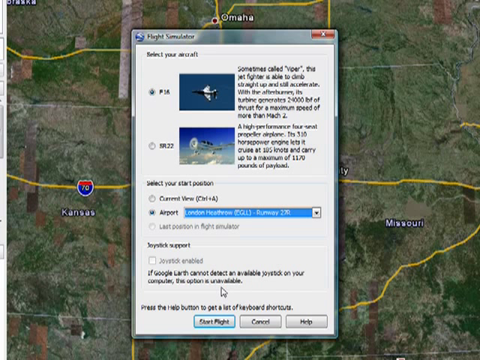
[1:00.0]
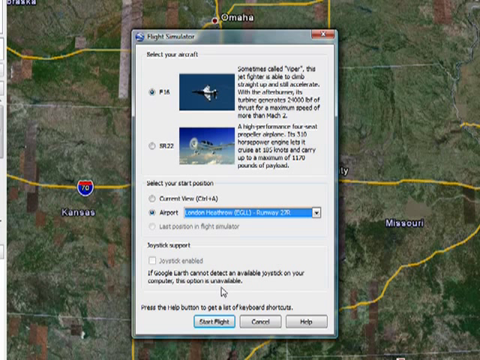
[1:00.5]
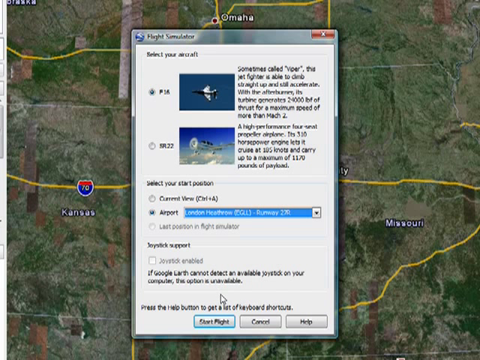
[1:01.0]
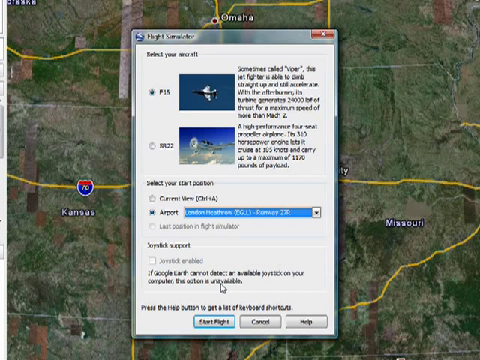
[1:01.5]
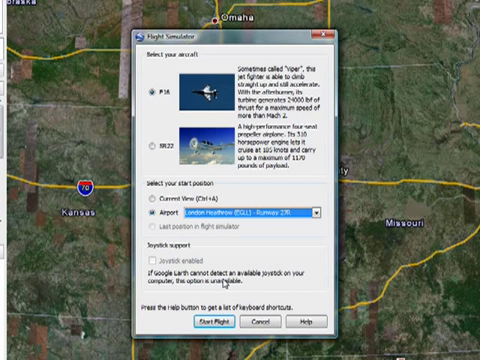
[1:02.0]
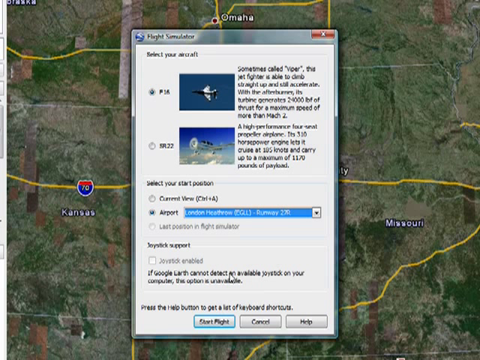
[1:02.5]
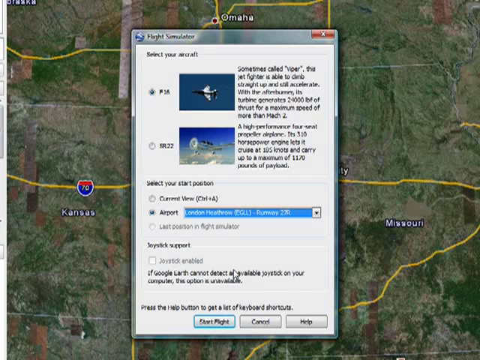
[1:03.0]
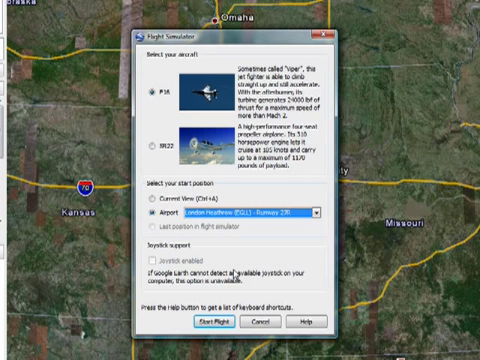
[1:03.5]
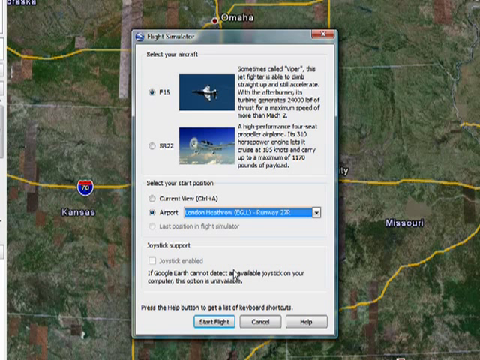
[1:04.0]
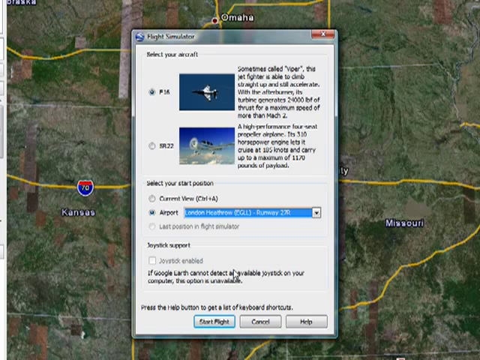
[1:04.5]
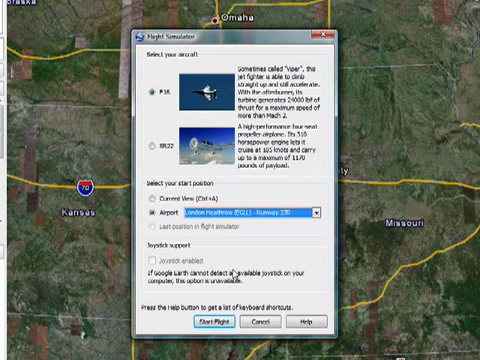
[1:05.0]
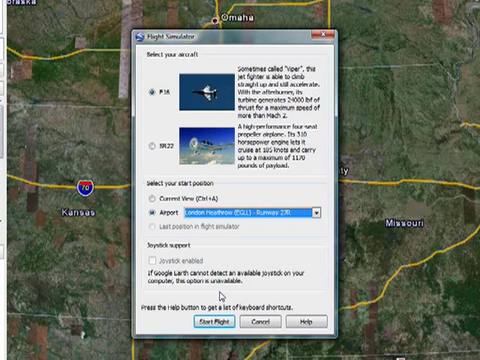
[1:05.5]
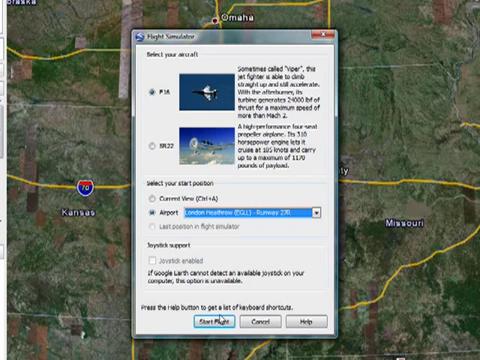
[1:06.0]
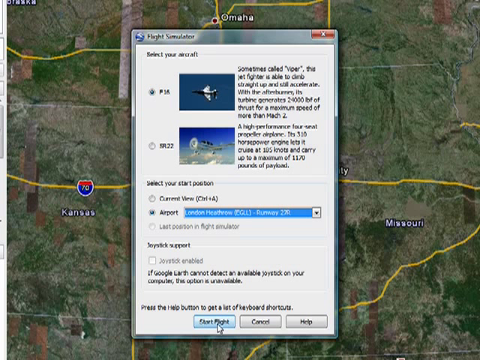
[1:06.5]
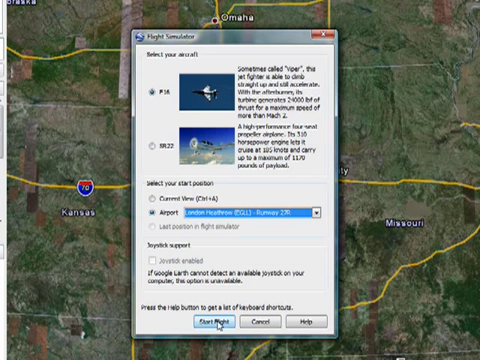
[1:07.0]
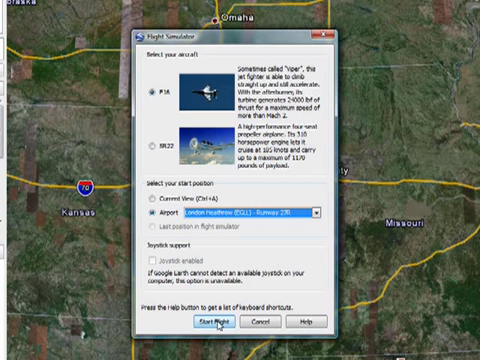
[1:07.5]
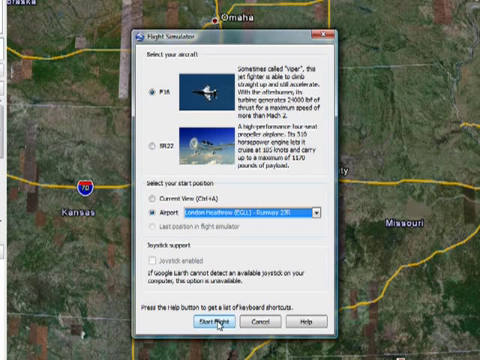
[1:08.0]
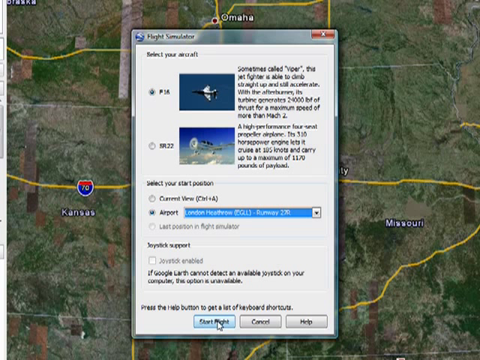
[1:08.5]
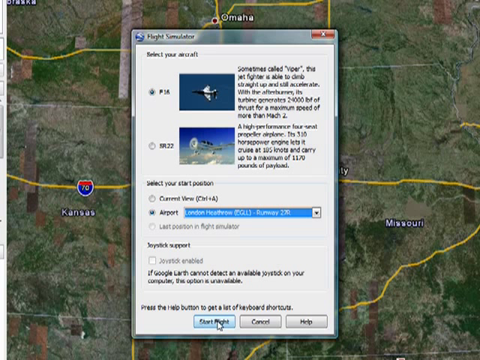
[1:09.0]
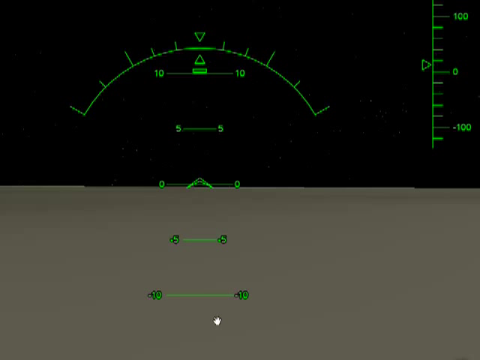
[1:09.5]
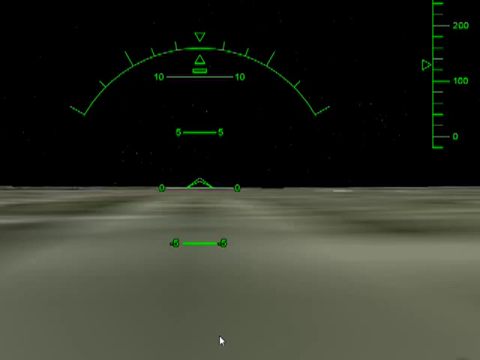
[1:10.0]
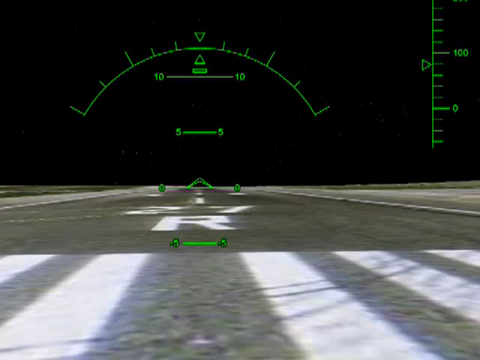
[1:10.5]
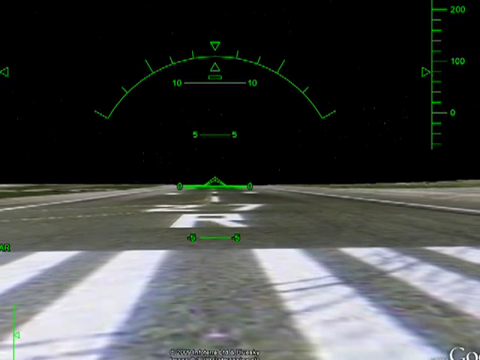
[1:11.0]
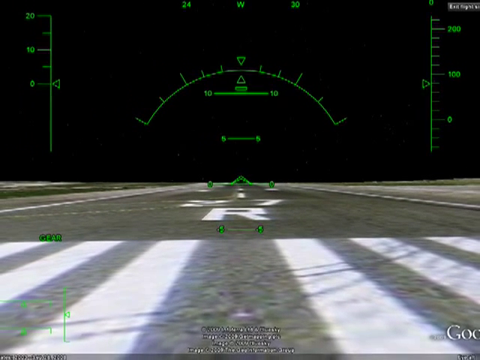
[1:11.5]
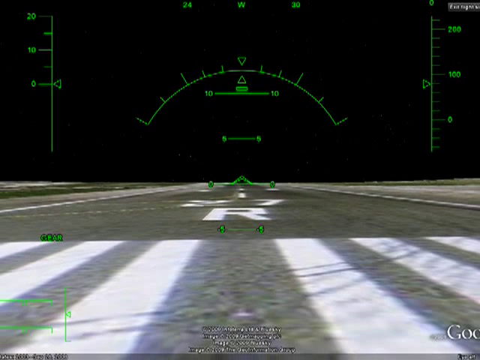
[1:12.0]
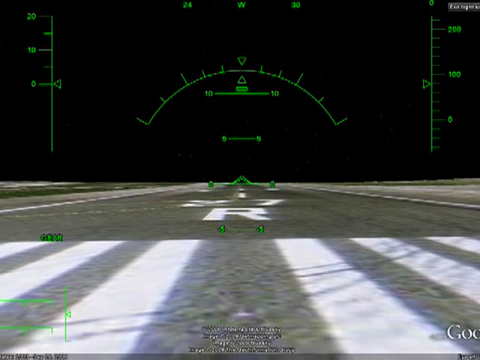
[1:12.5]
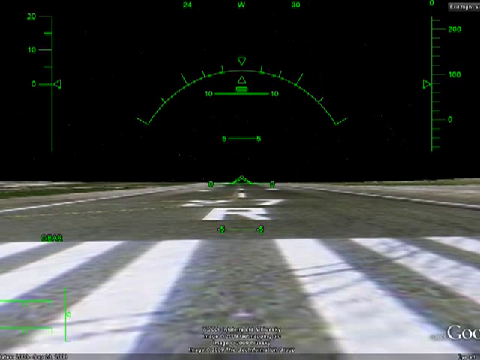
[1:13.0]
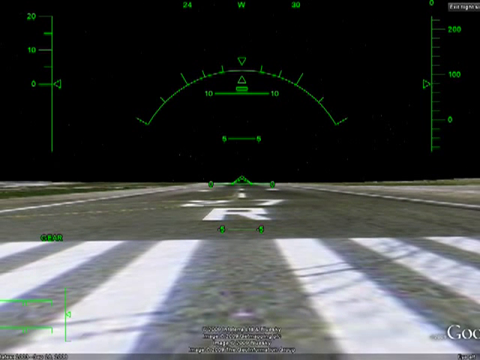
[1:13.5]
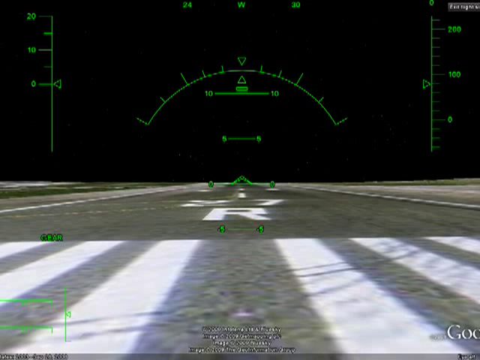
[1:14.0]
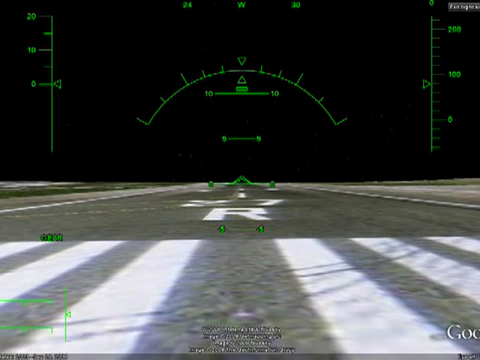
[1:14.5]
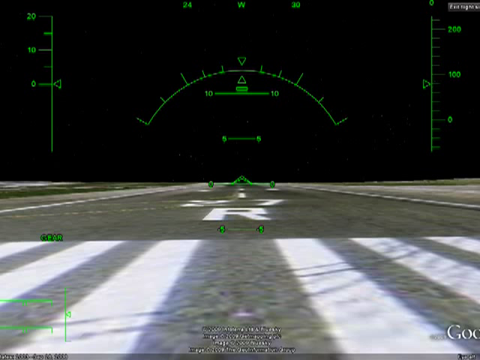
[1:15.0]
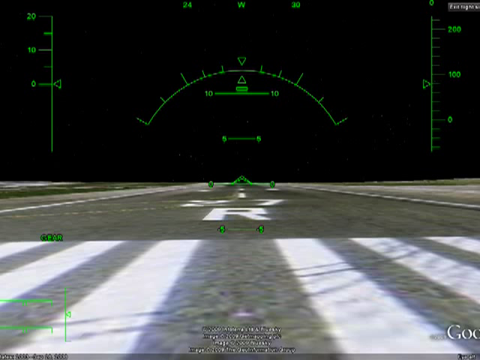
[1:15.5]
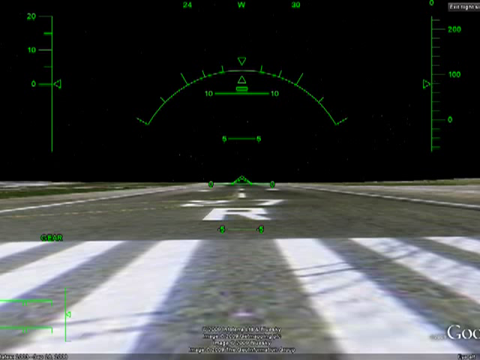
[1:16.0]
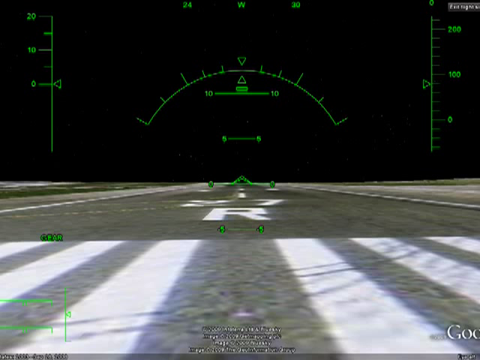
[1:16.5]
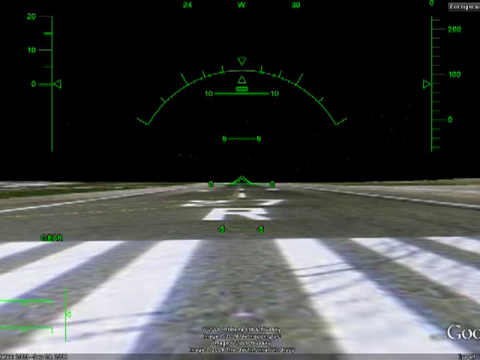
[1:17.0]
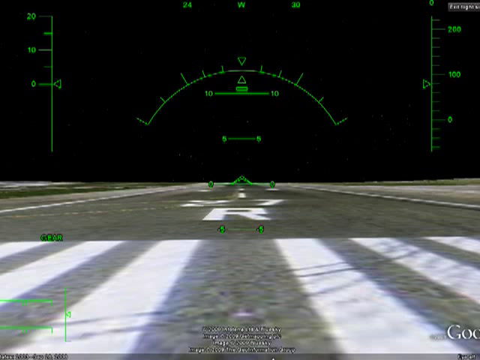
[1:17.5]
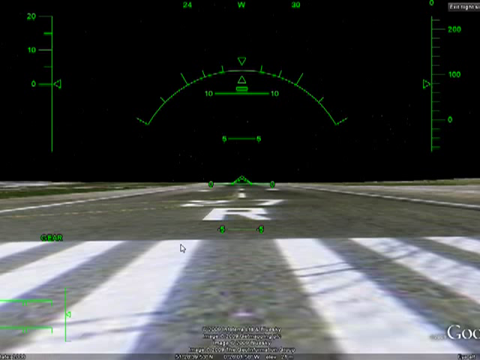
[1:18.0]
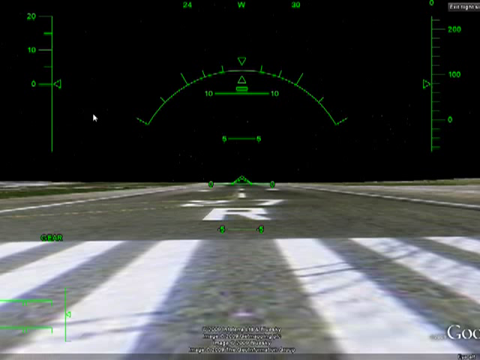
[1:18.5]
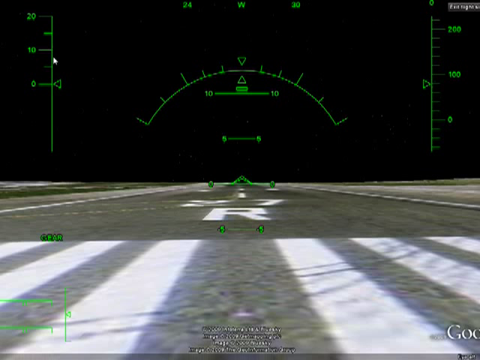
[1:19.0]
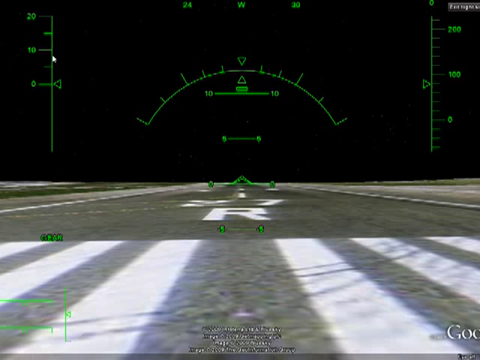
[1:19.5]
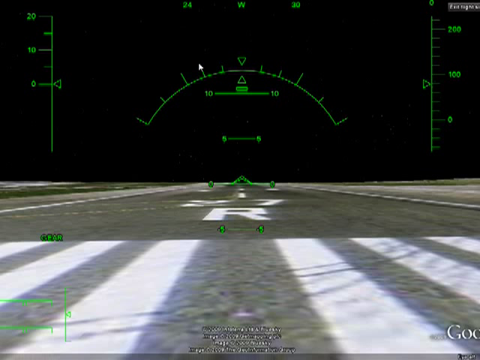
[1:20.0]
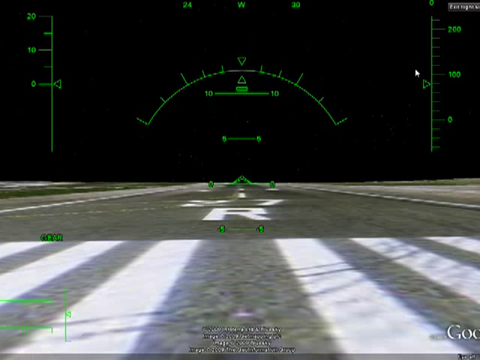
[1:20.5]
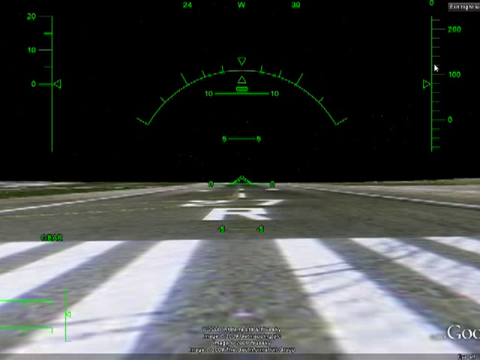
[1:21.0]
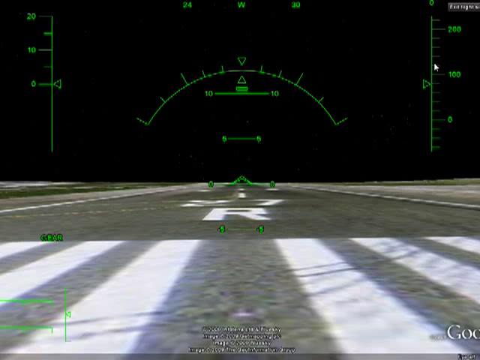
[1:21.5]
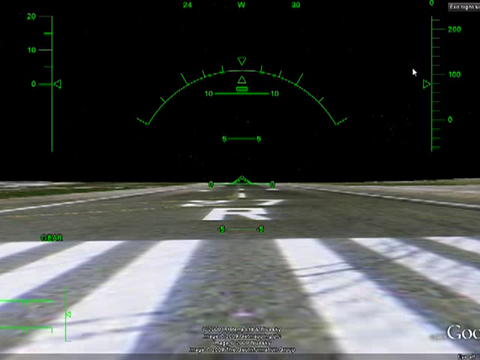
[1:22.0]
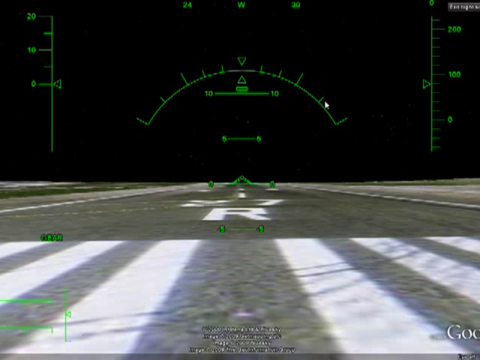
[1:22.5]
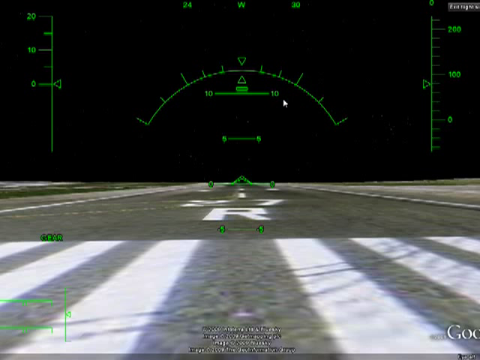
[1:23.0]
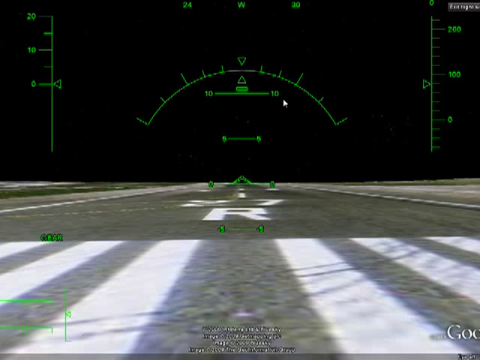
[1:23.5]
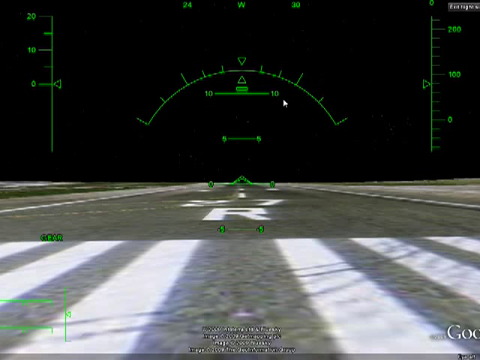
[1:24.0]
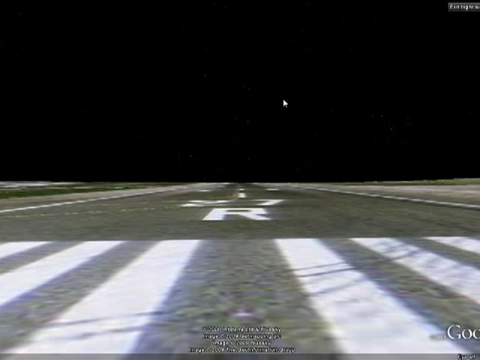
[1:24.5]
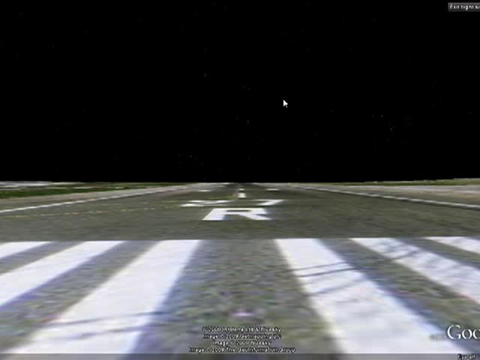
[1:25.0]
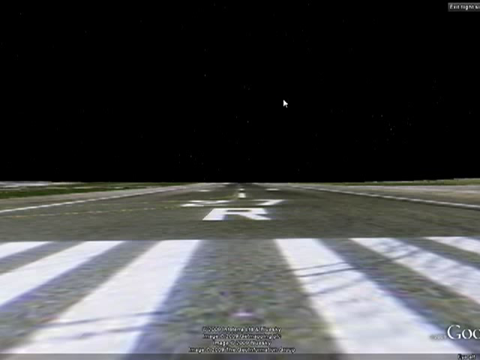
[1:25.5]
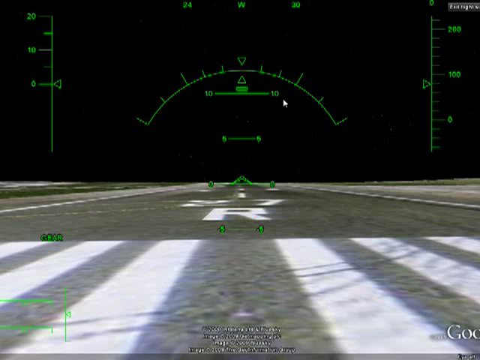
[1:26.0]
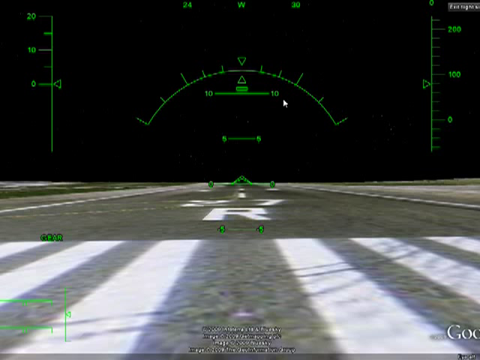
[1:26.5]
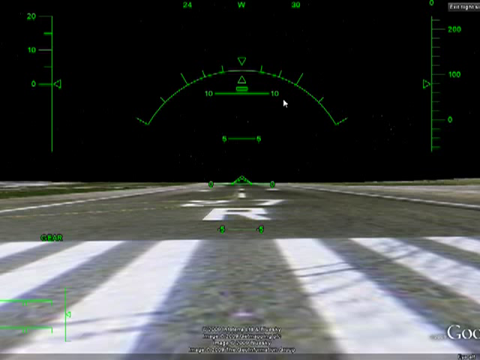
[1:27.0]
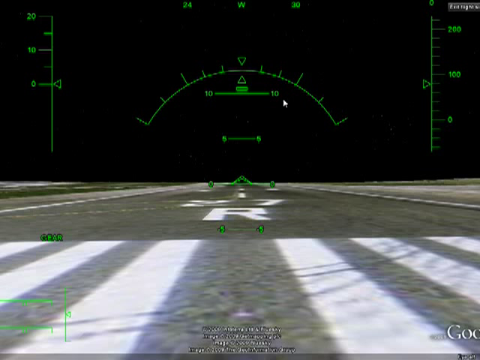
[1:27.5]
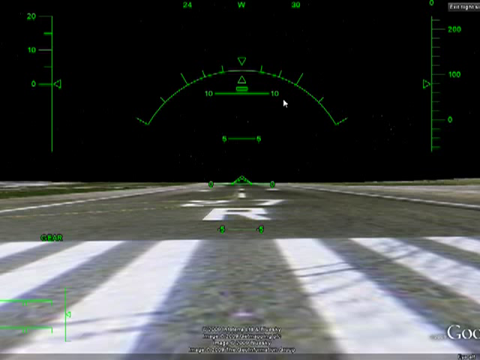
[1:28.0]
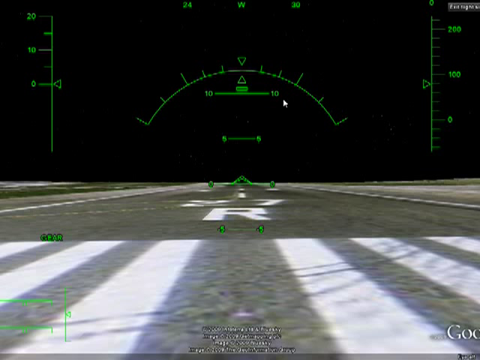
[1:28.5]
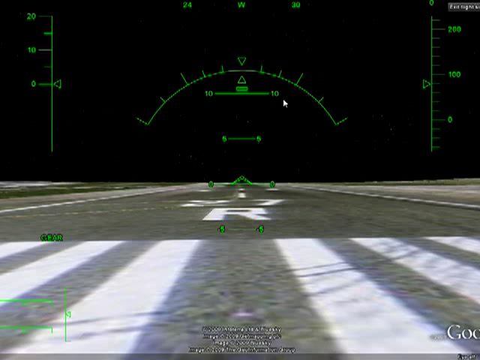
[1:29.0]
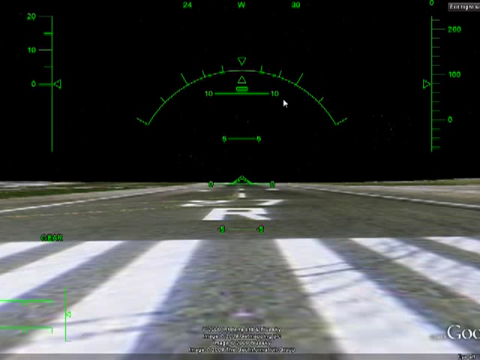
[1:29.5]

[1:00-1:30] The user hovers the mouse around the joystick section, then highlights the start flight button and clicks it. The entire view changes to simulate the cockpit of a jet fighter. There is no interior of the jet, but there are several green indicators on the screen, apparently including ones for the altitude and the lateral tilt of the plane, and some kind of crosshairs toward the center of the screen. A compass at the top of the screen shows the plane on the runway facing a westerly direction. There is no movement yet; the plane is just on the runway, which has white lines and the letter R painted on it.